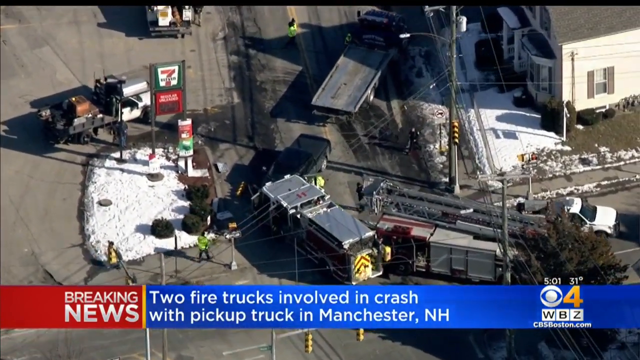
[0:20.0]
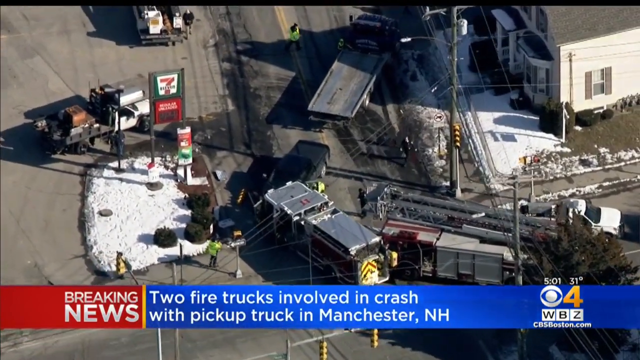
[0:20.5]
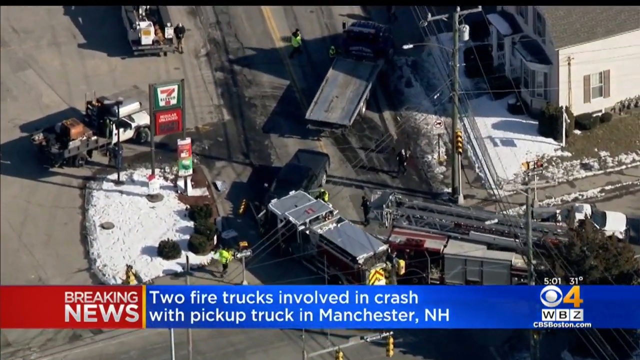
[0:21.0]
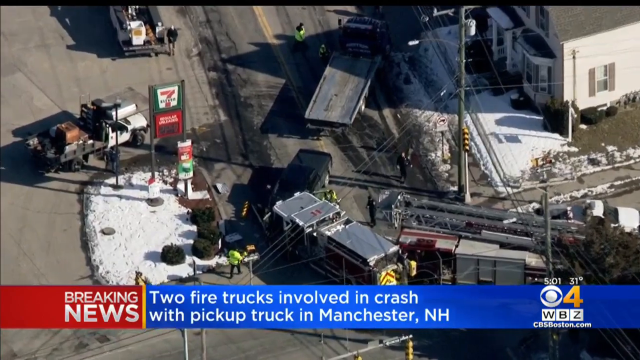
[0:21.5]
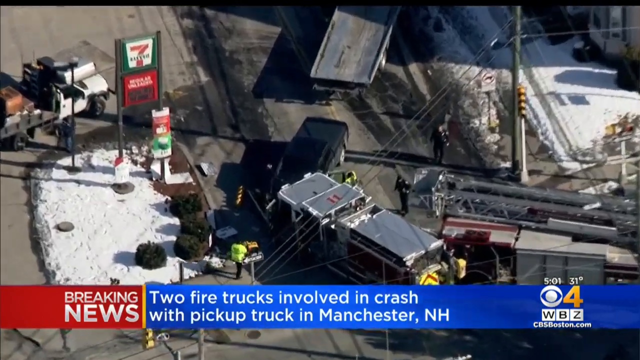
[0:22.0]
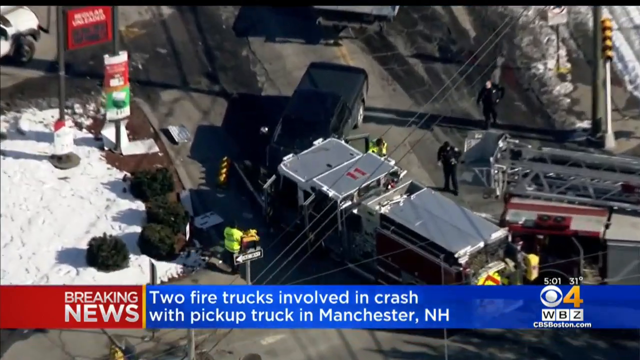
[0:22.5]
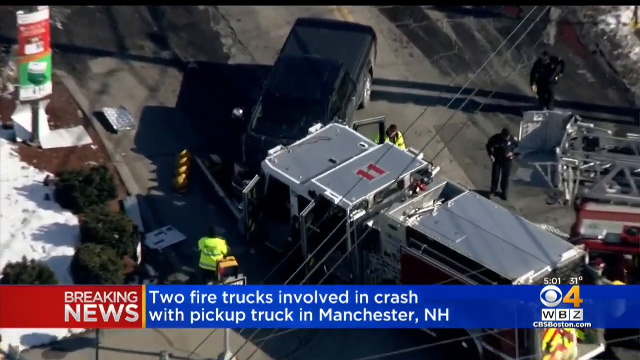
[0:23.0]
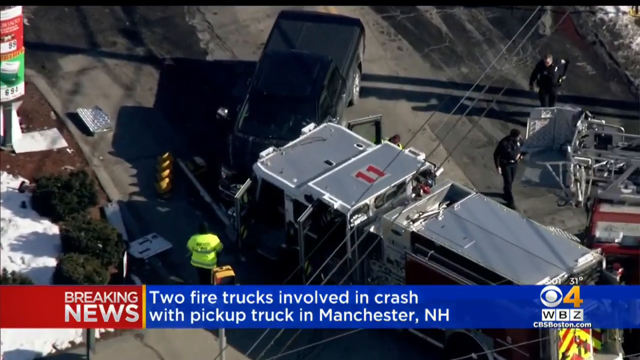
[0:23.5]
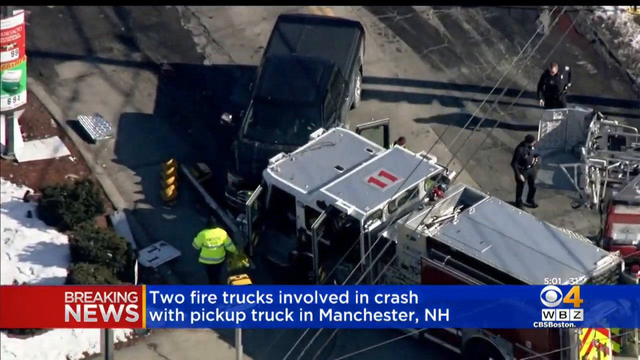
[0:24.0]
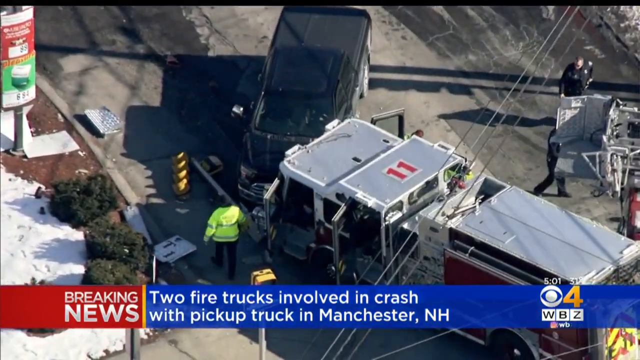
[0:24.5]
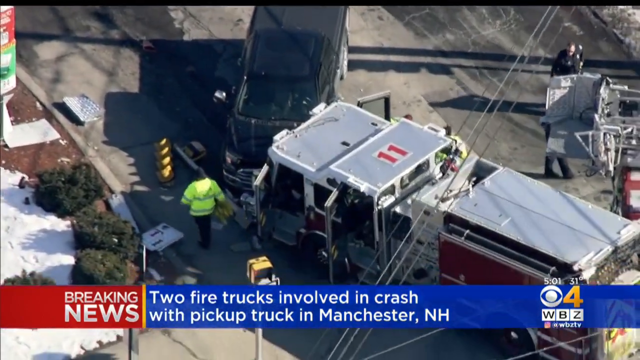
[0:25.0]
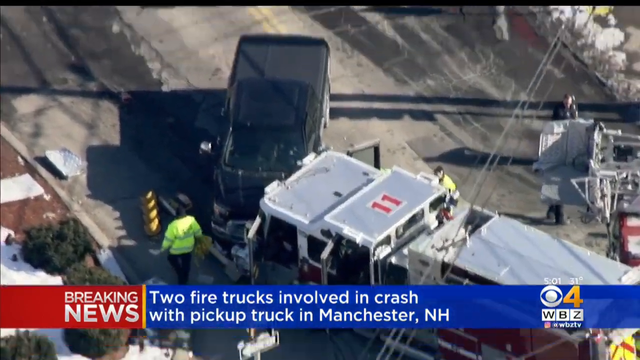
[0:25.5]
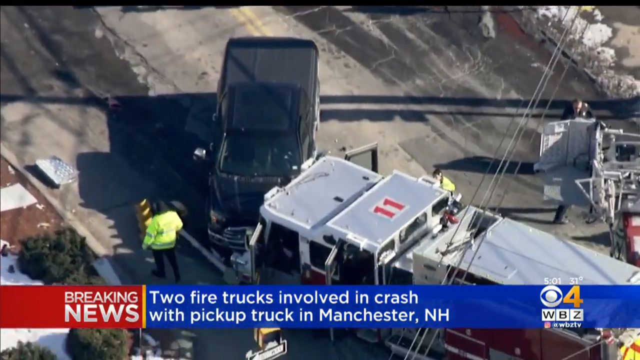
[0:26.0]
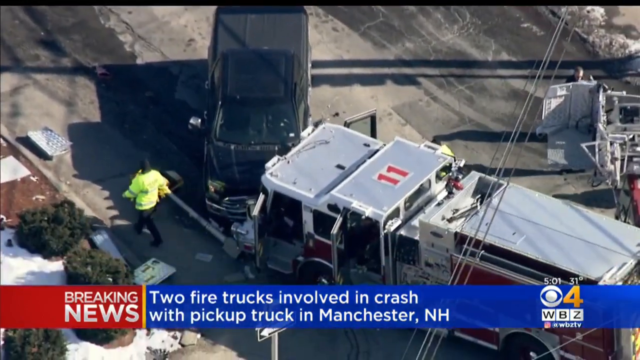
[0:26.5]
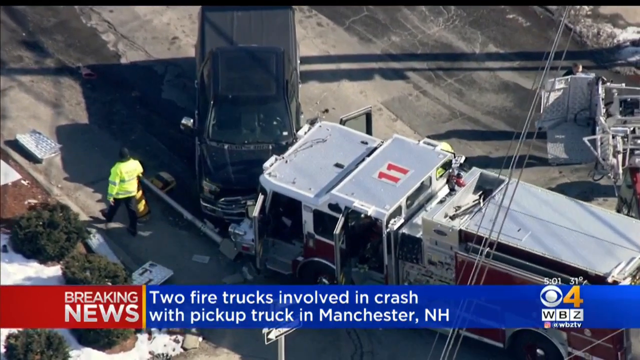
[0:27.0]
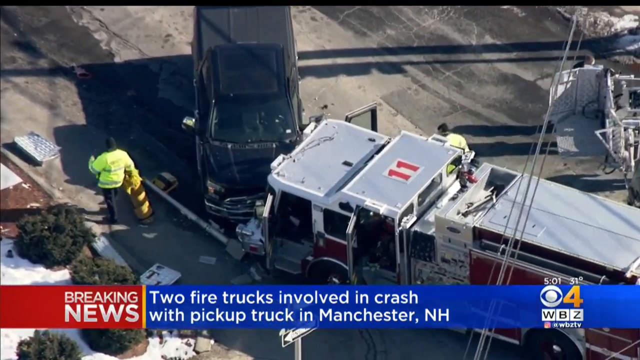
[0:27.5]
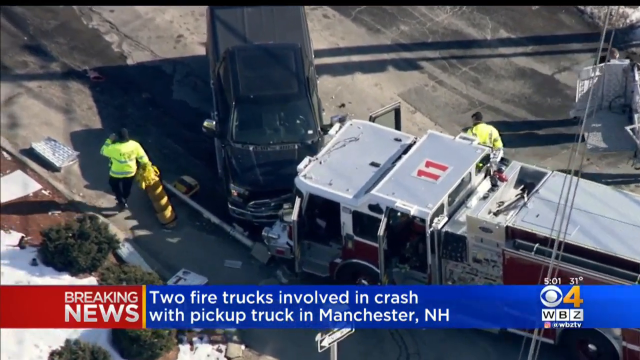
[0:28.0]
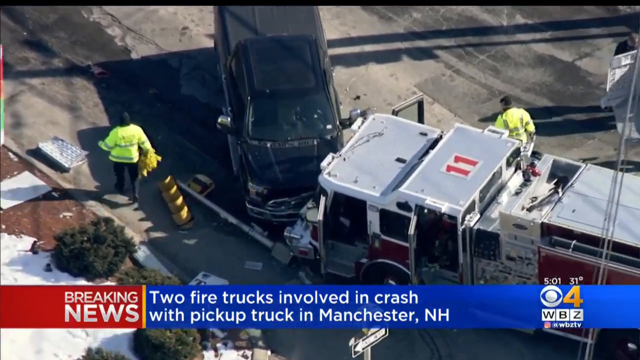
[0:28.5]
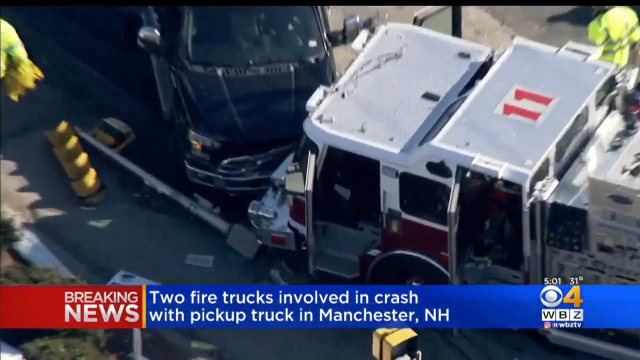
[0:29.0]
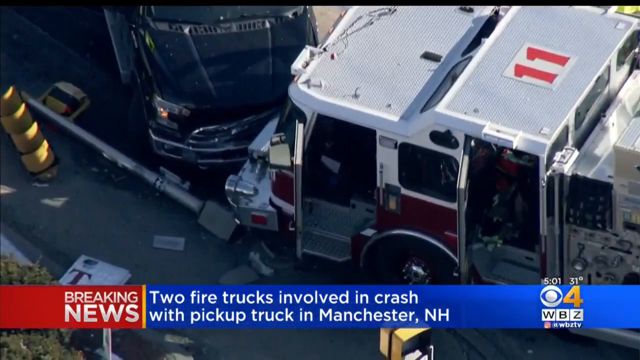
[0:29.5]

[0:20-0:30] An aerial view shows the two fire trucks involved in a crash; they appear to have hit a black truck. A 7-Eleven sign is to the left. The camera zooms in on a man in a bright yellow jacket walking toward the wreck. Behind the black truck is what looks like a tow truck. The camera zooms in further, showing a few police and another person in a bright yellow jacket. There is snow on the grassy area but not covering the ground, and the road is snowless with some wet spots. One of the men in a yellow jacket seems to be carrying some rope, or possibly another jacket; it is unclear. The crash appears to have happened as one firetruck went around a corner and hit the truck, and a second firetruck behind it hit the first firetruck.